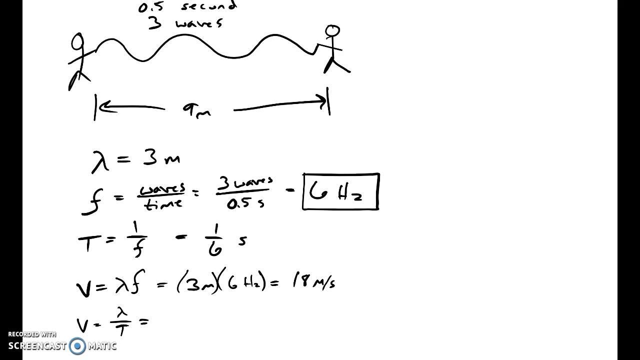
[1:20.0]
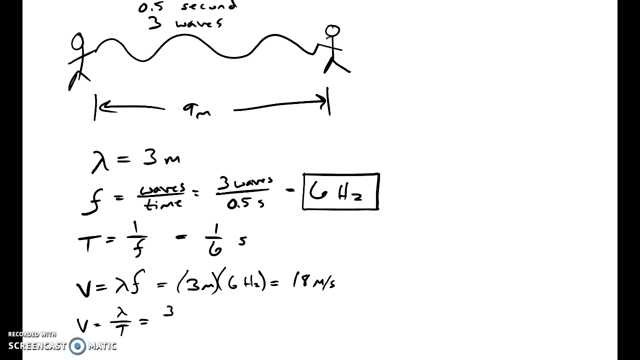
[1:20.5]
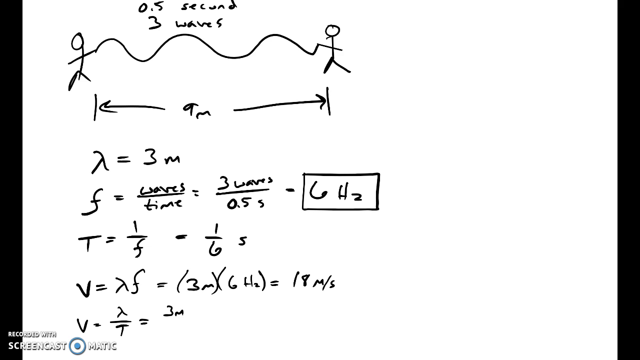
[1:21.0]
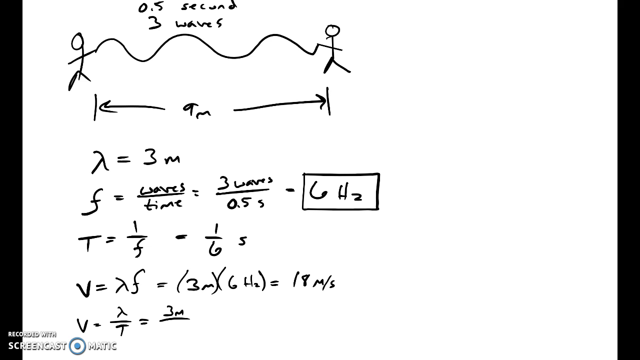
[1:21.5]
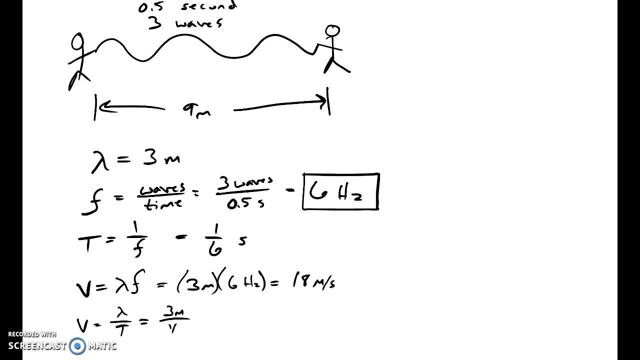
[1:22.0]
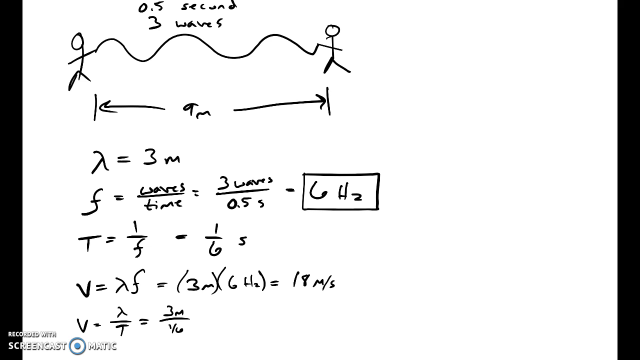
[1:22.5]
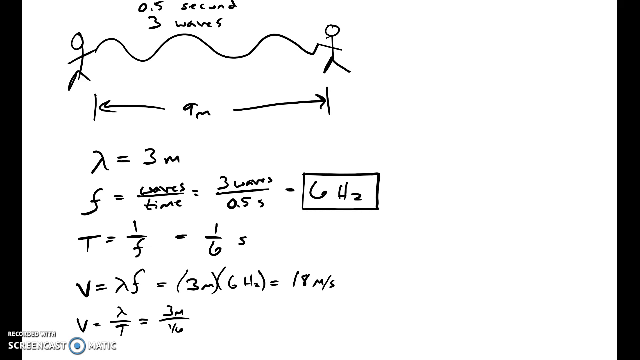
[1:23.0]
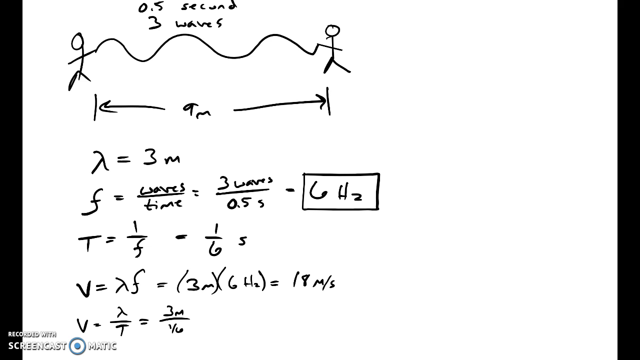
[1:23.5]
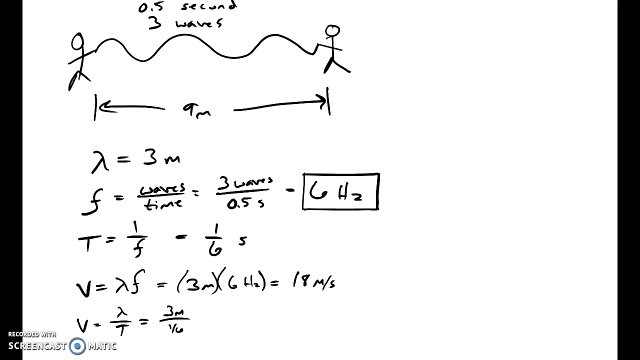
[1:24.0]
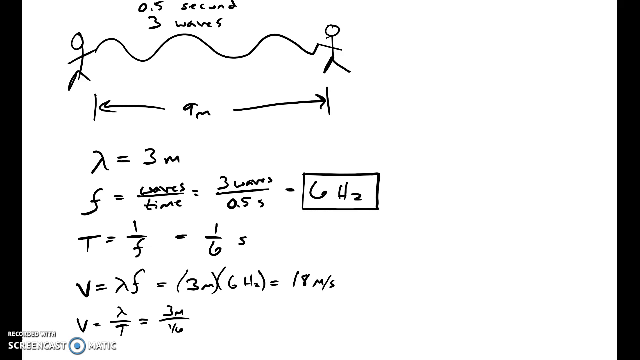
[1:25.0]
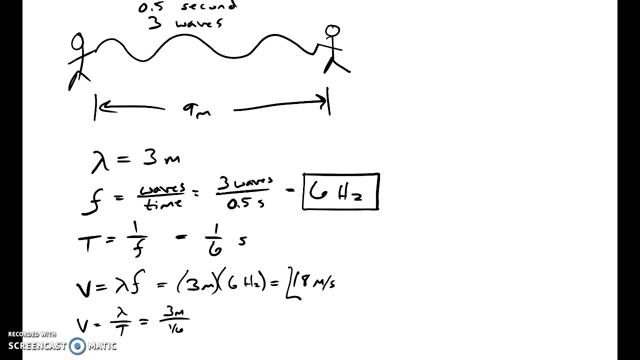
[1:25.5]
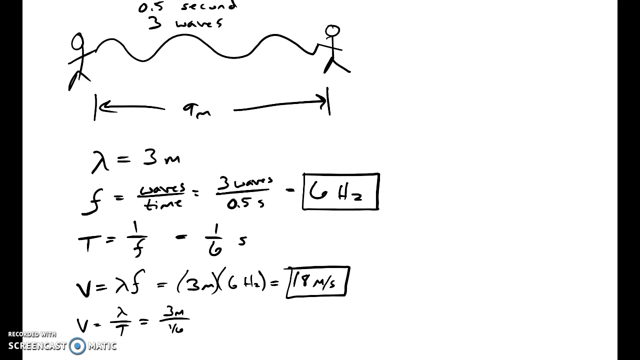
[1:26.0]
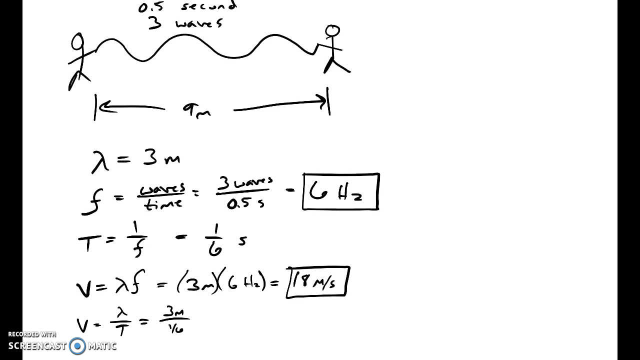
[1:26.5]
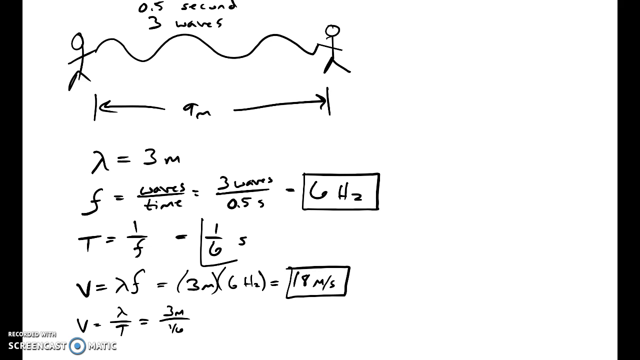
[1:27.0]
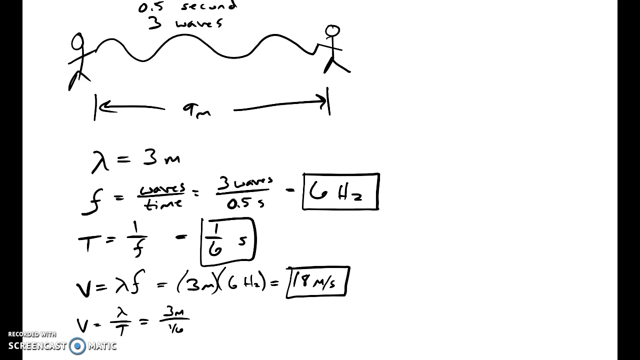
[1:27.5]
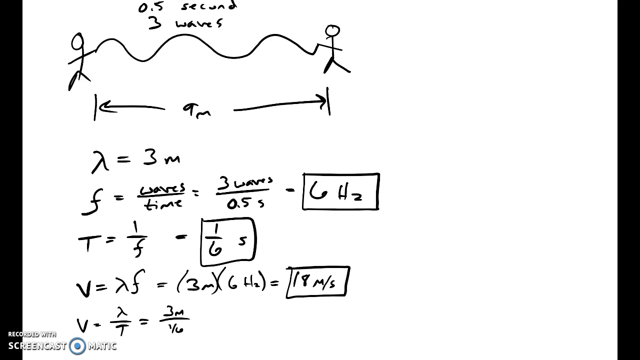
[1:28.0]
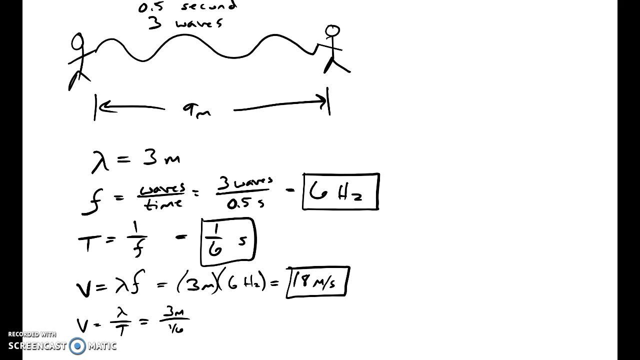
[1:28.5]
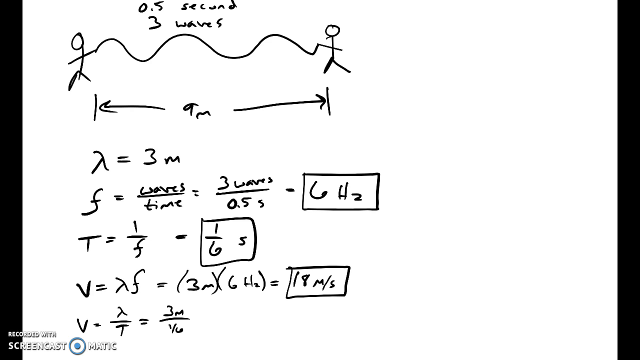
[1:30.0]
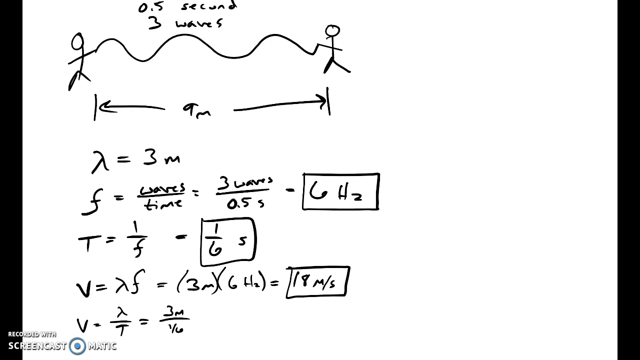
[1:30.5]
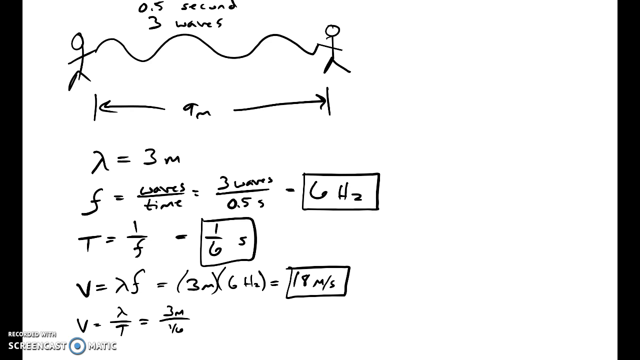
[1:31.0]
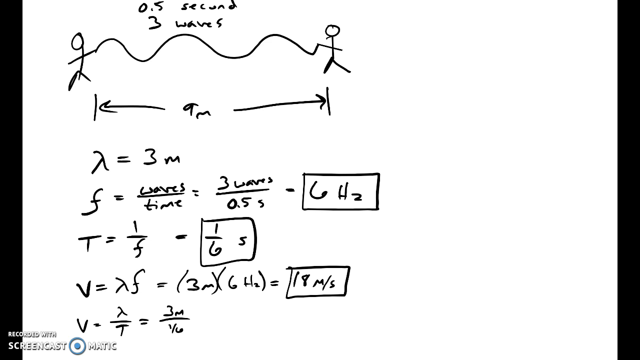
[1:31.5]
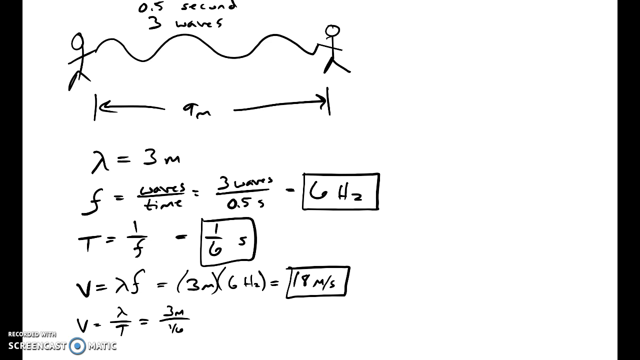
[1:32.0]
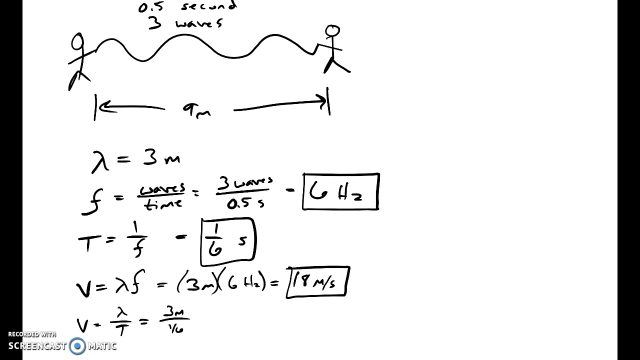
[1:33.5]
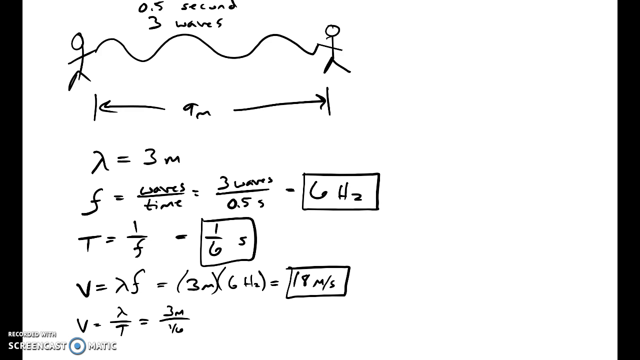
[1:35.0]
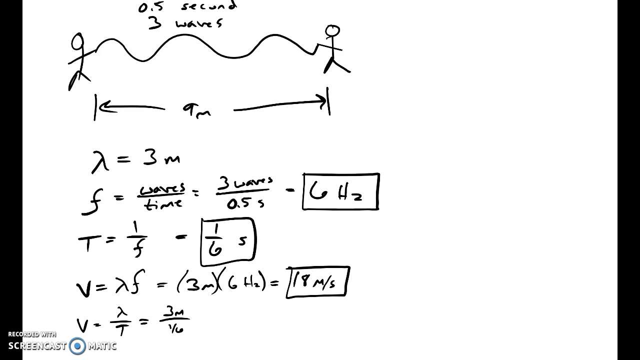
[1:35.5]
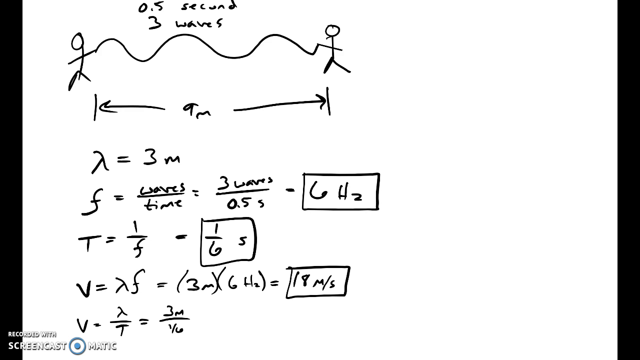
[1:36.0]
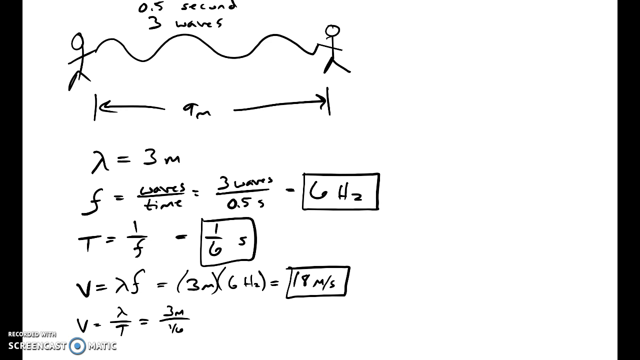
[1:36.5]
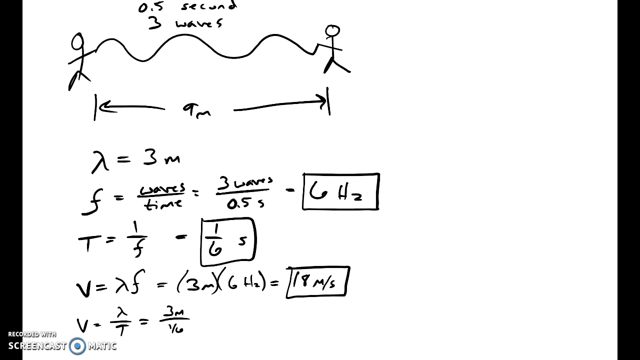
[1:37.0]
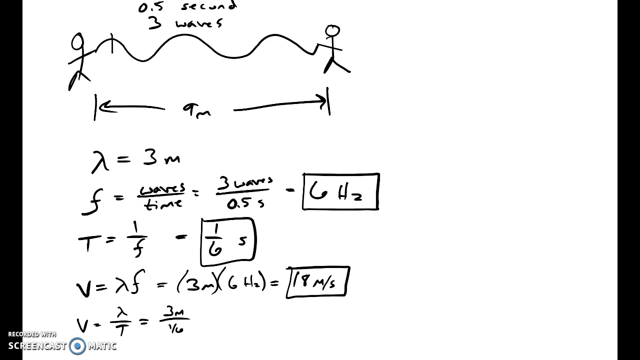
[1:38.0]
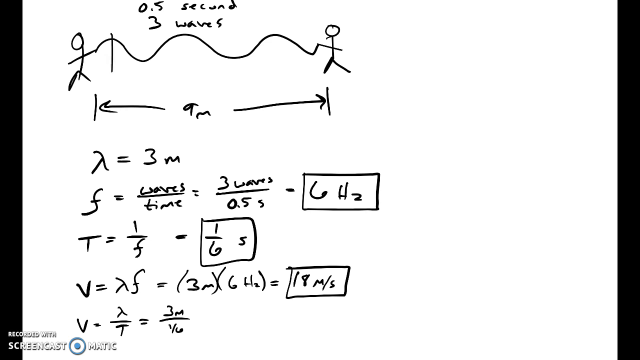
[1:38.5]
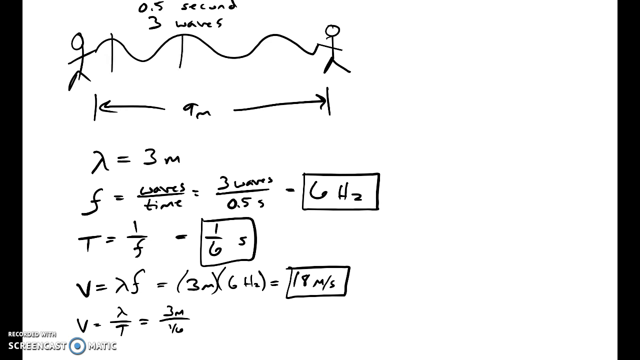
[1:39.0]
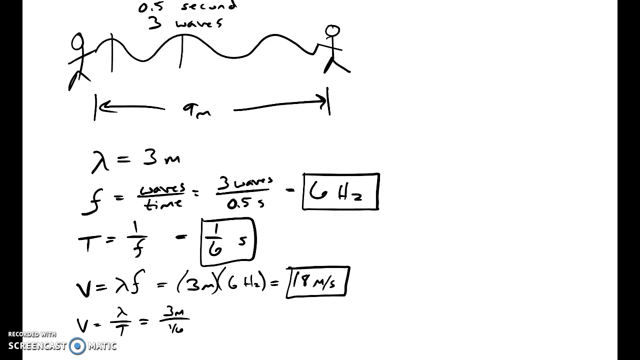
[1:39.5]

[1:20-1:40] Someone finishes the previous formula: F equals 2 over T equals 3M over an unknown number, written in black. The writing then moves to the formula above it, V equals some digit F equals (3M)(6HZ) equals 18MS, and a square is drawn around "18MS". The square is not perfectly done and is a little off. Above that is another formula whose answer is 1 over 6S, and a square is drawn around it in the same way, again kind of sloppily. Everything is written in black. The page now holds only formulas, each ending in a boxed answer except the bottom one, where the digit on the bottom is still unclear. Everything is black on white, and the writing is smooth.